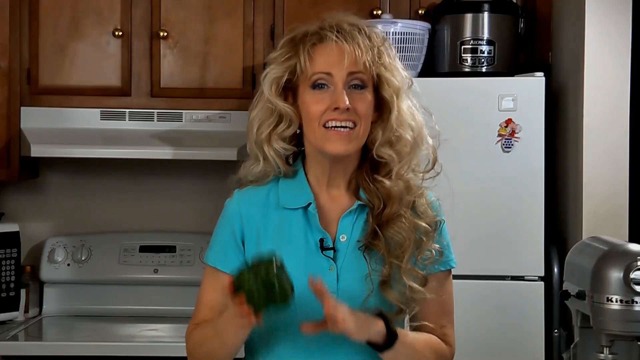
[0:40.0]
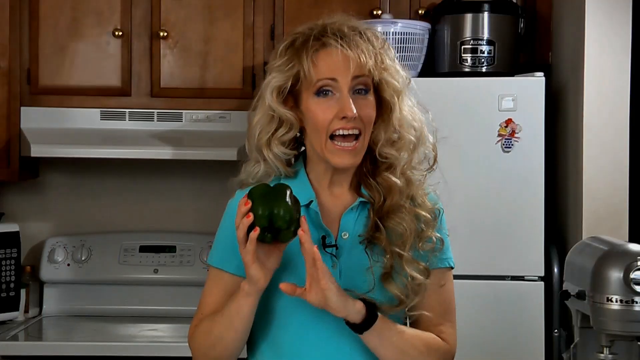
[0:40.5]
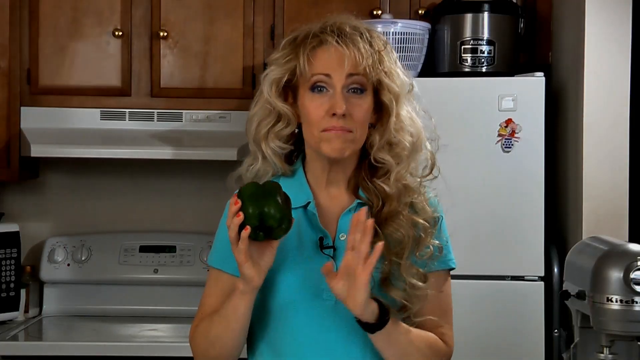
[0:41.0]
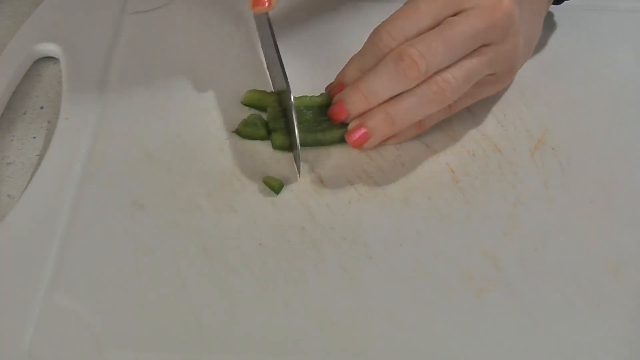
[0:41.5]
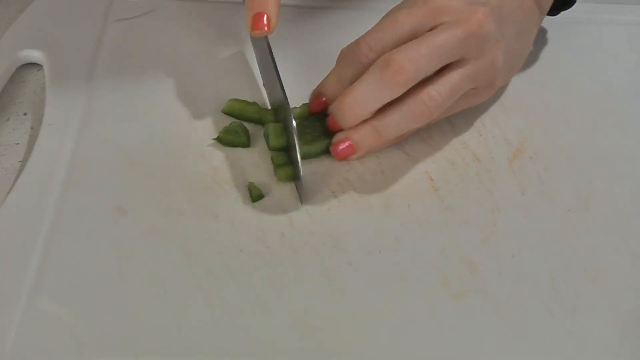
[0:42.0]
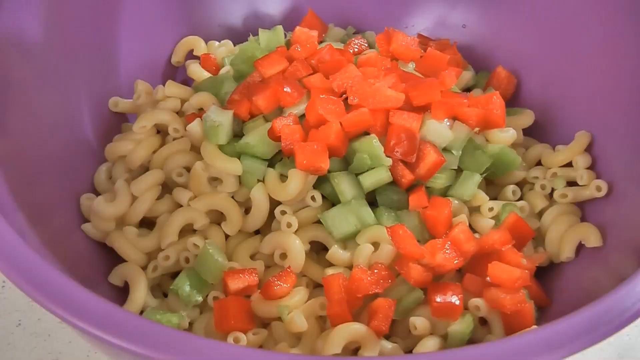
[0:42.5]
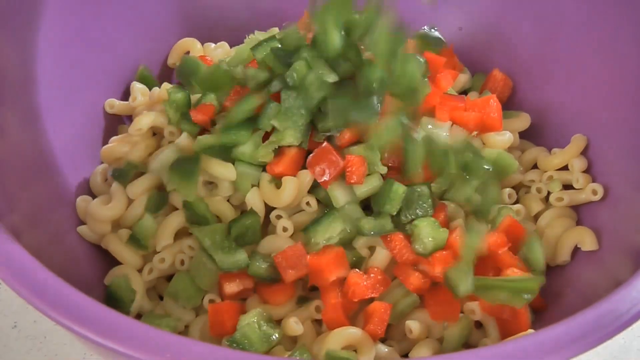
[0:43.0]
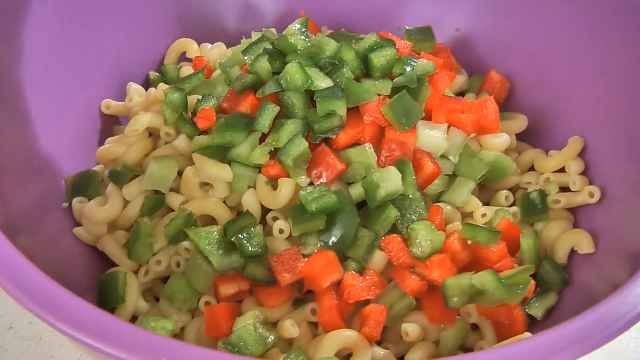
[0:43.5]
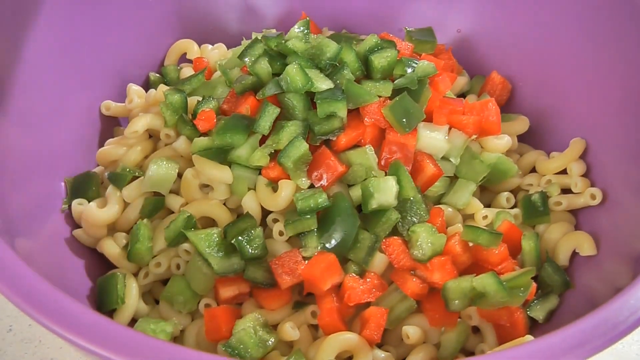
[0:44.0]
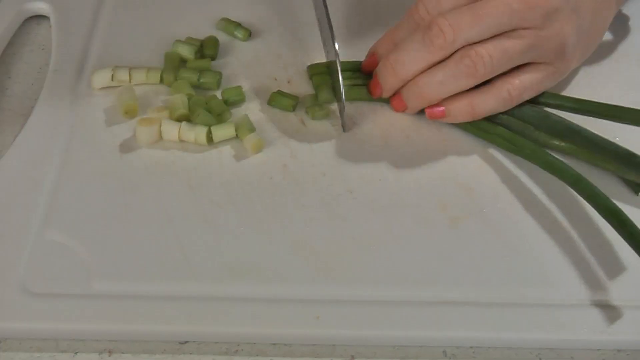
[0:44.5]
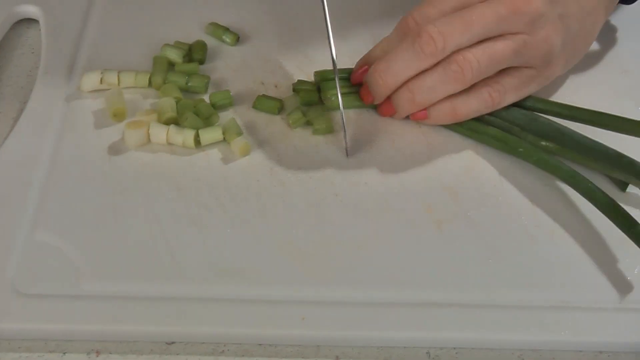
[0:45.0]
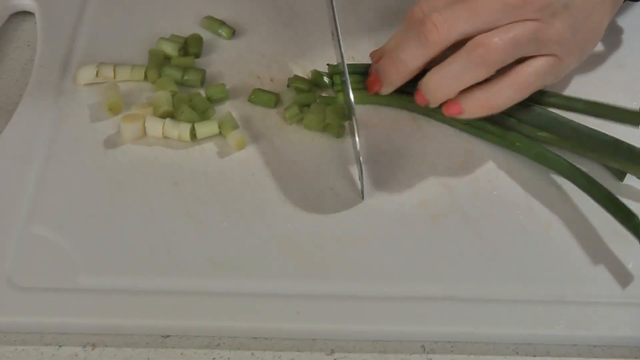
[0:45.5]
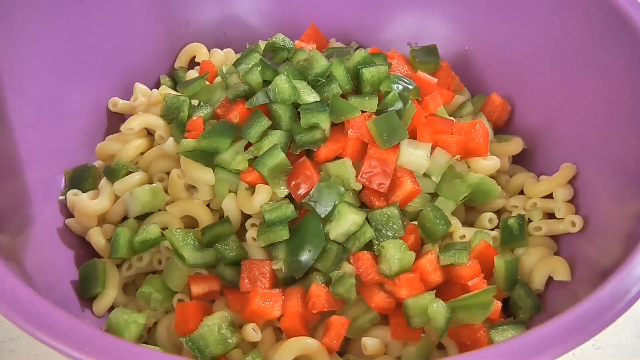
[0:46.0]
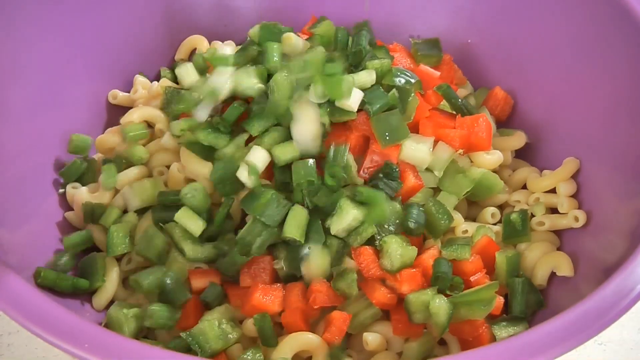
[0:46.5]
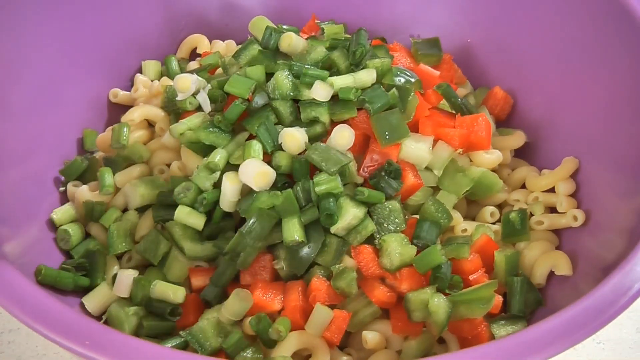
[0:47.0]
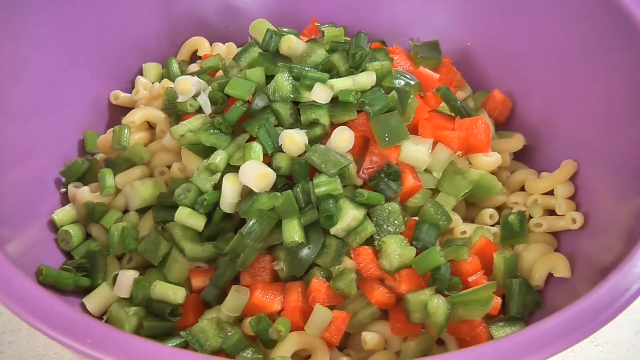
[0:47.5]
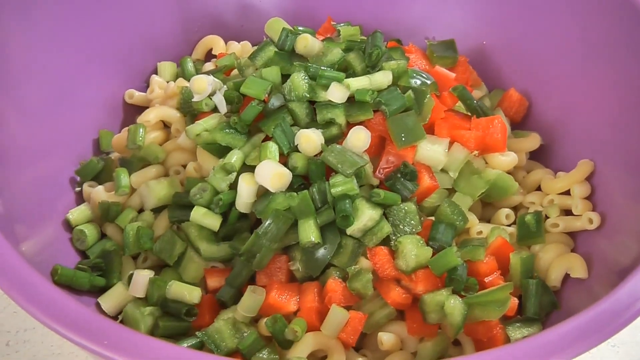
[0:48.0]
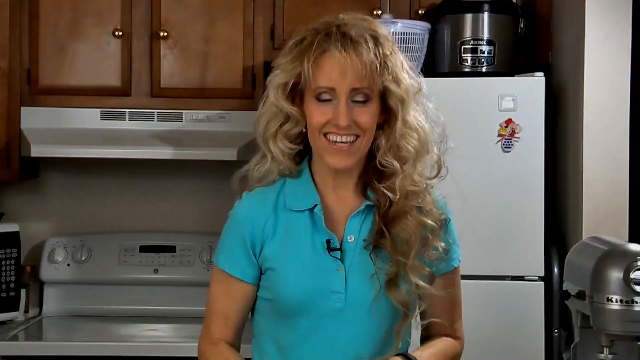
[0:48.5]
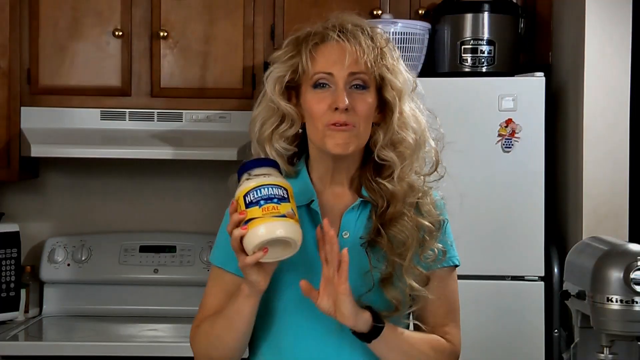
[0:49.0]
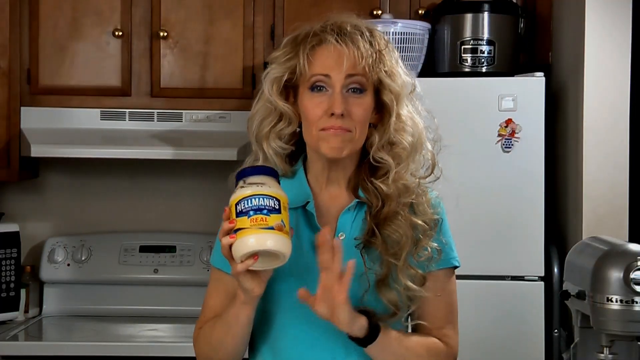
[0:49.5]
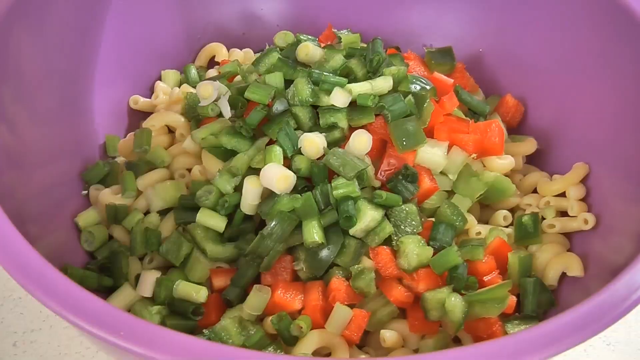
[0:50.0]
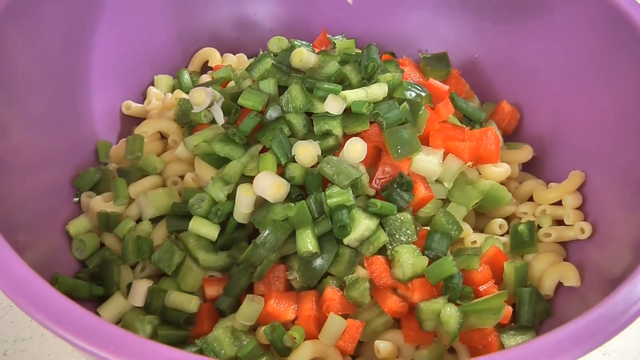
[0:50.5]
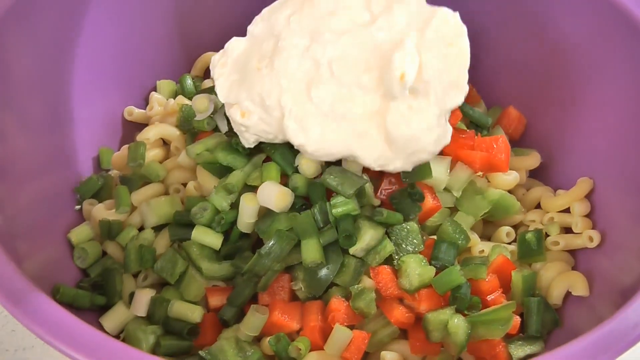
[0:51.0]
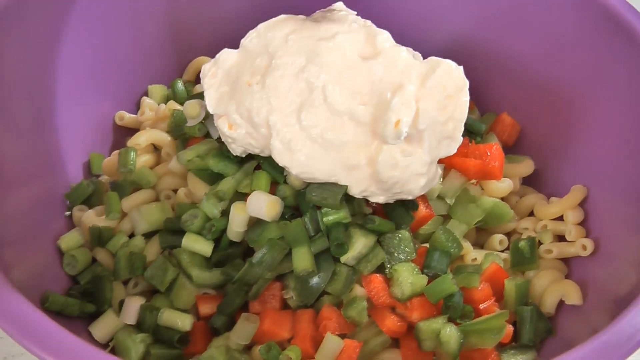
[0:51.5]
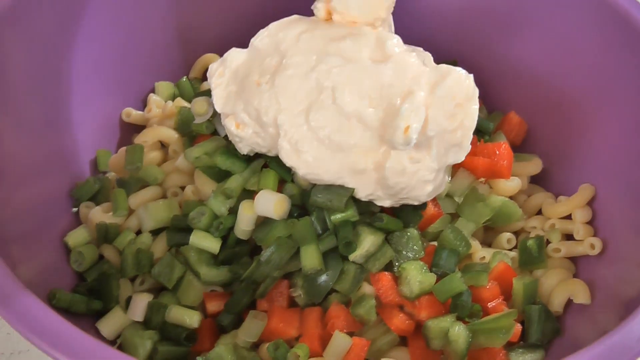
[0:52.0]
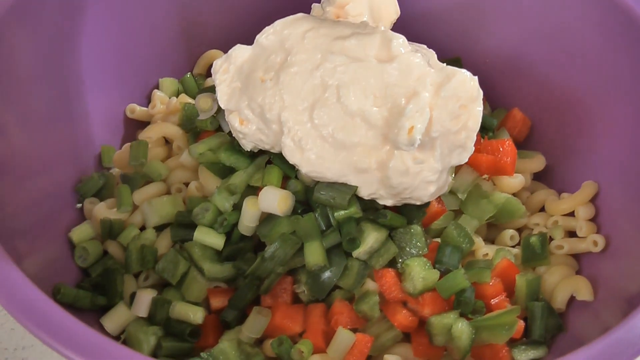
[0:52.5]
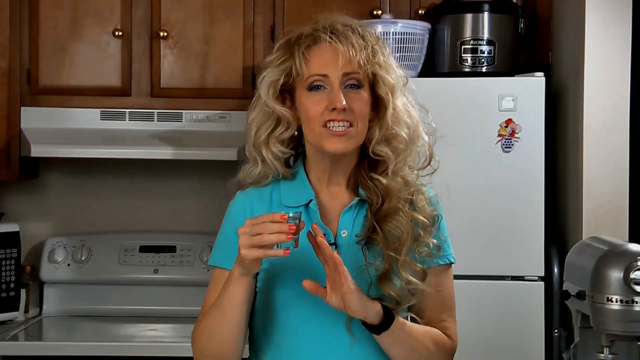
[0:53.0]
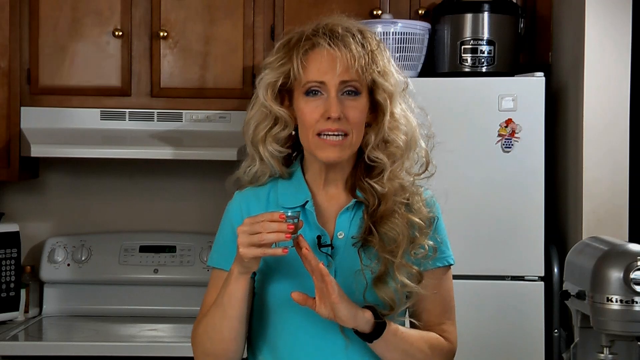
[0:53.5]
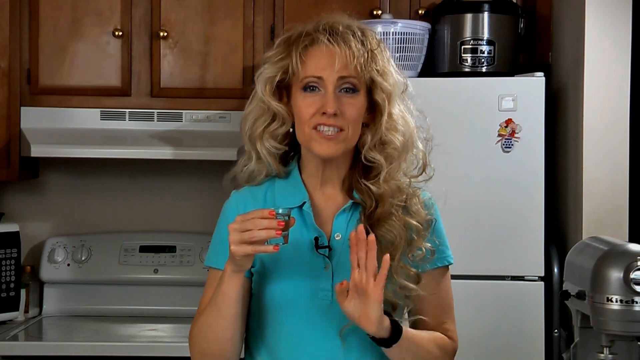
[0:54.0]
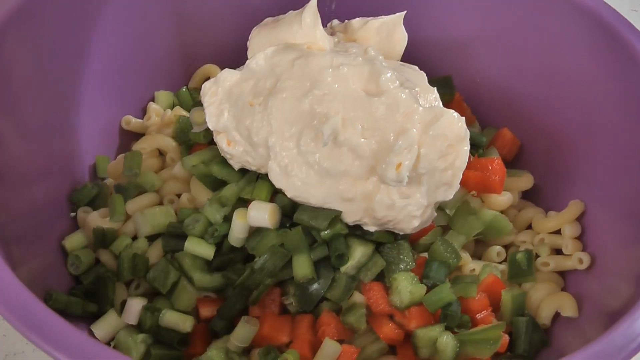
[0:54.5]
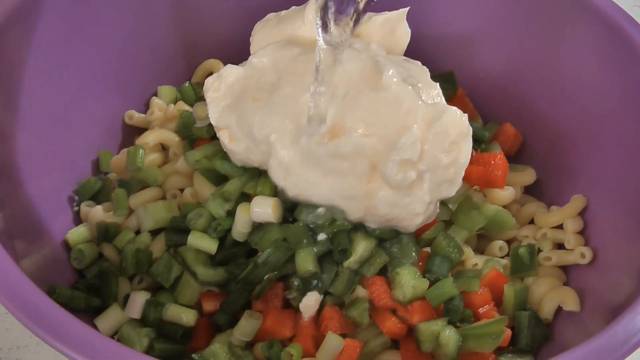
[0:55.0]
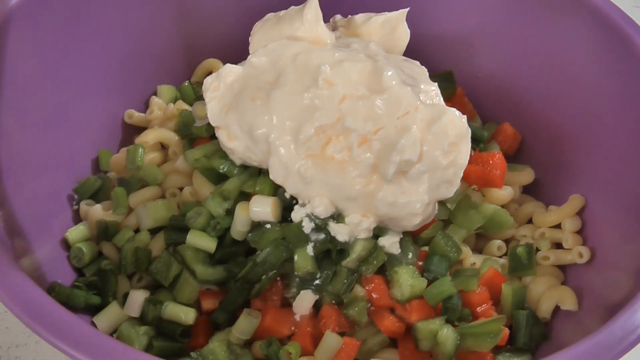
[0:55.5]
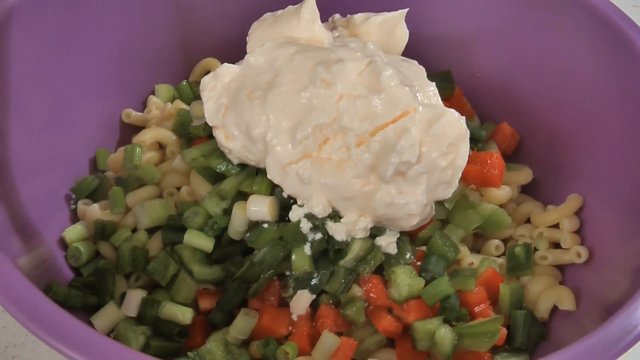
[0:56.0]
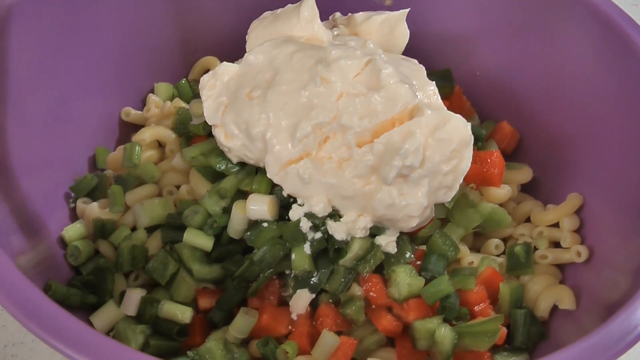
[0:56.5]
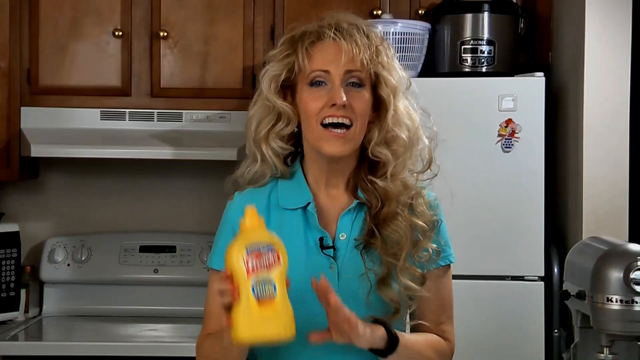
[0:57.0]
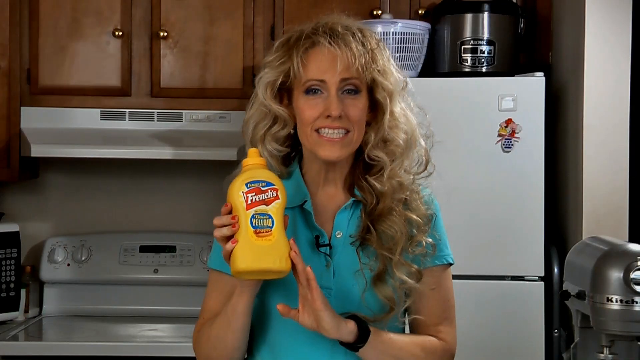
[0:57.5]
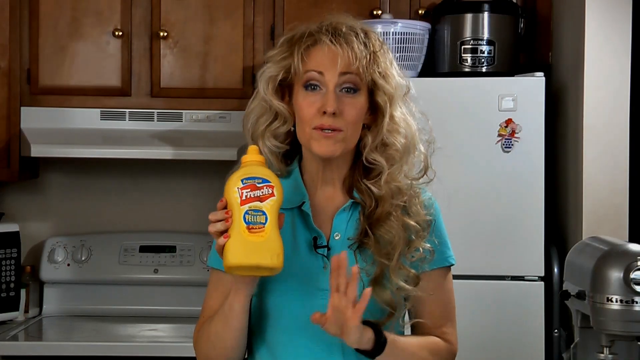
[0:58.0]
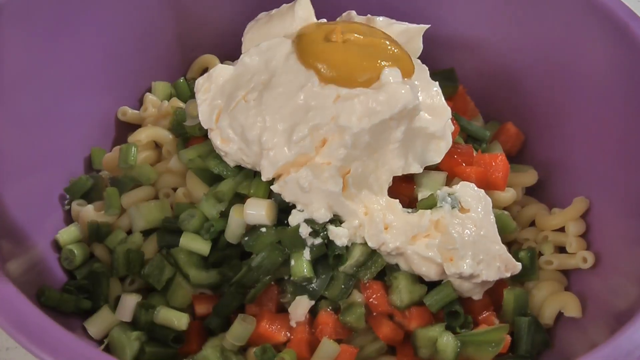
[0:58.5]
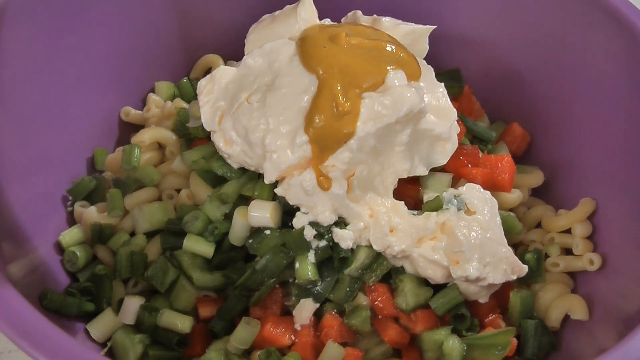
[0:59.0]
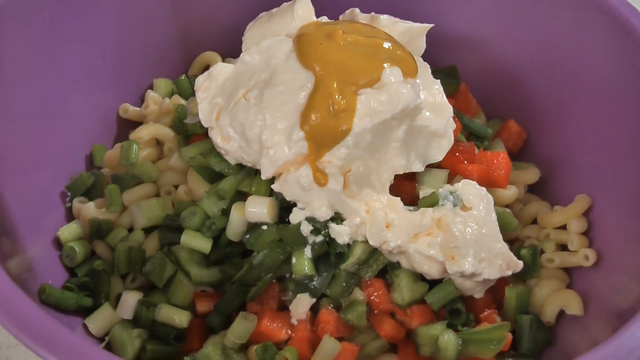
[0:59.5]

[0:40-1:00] The woman holds up a green pepper, showing it to the audience. She cuts the green pepper into small pieces with a knife on a chopping board, then cuts a red pepper as well, and puts them in with the macaroni. Later she is shown cutting onion leaves again, and pours them into the bowl containing the macaroni, green pepper, red pepper and onion. She then picks up the mayonnaise, which has a blue paper, and shows it to the audience, then uses a spoon to put the mayonnaise into the bowl with the vegetables.